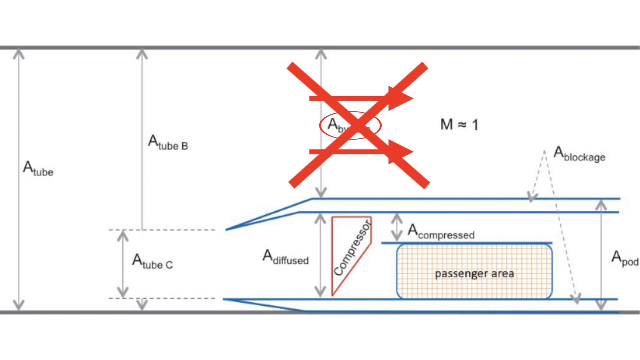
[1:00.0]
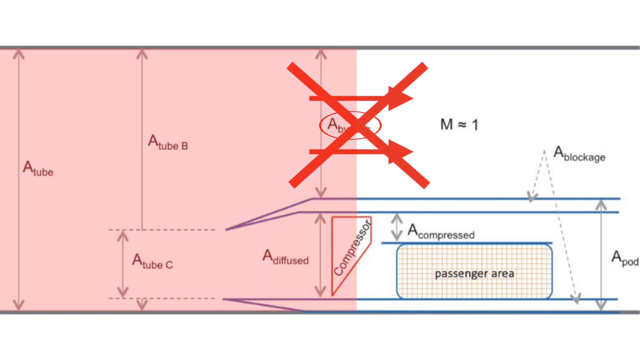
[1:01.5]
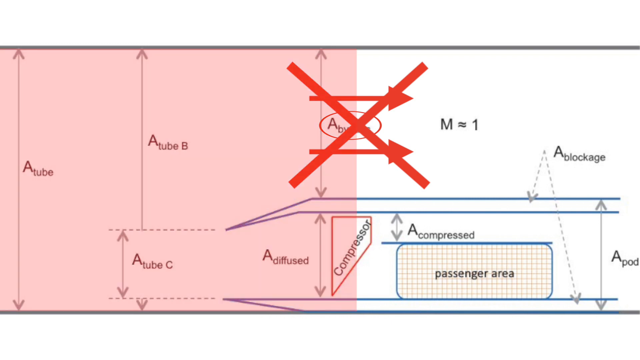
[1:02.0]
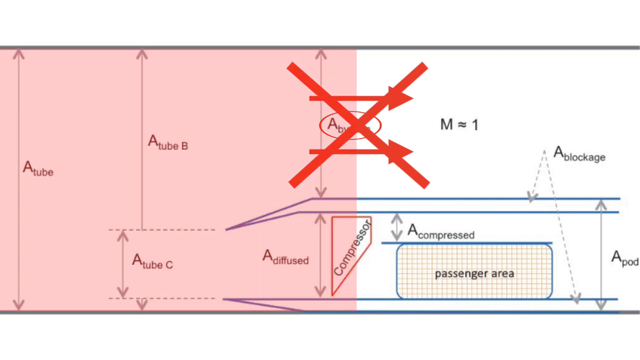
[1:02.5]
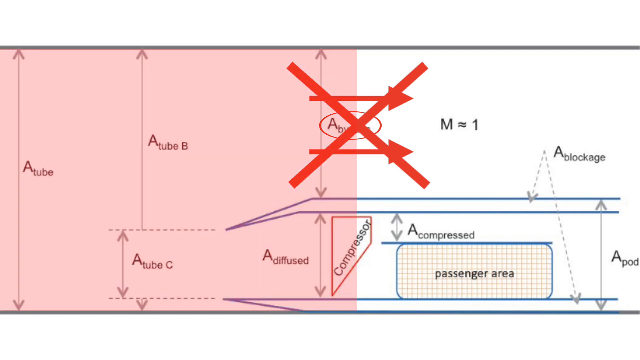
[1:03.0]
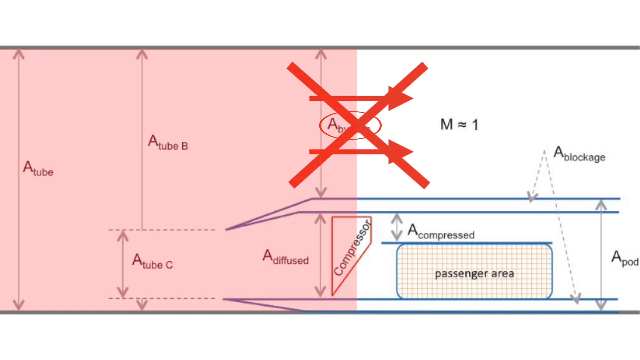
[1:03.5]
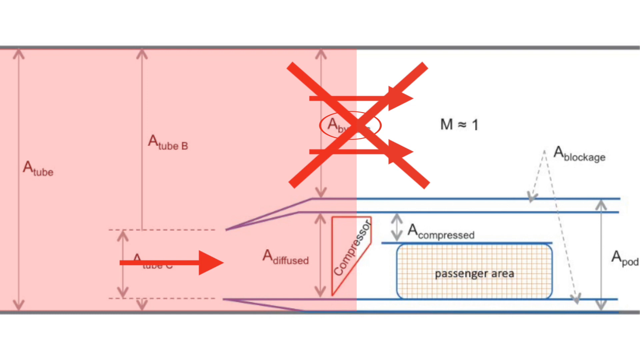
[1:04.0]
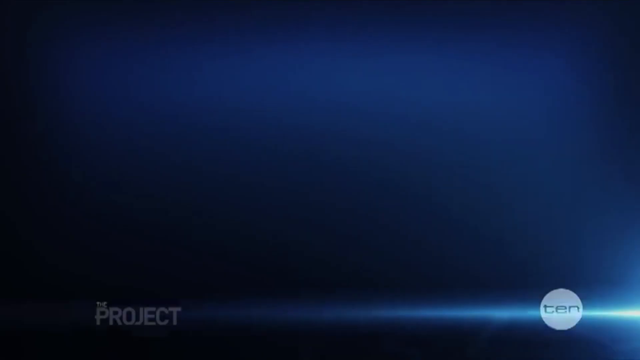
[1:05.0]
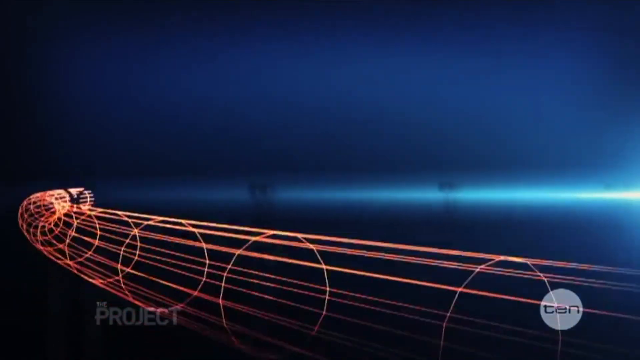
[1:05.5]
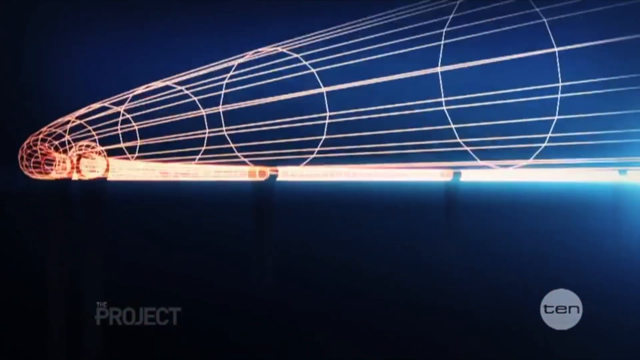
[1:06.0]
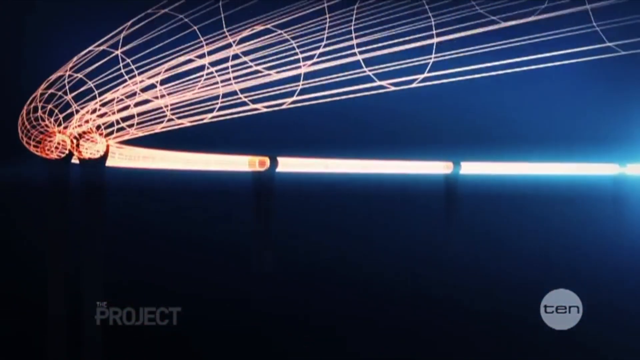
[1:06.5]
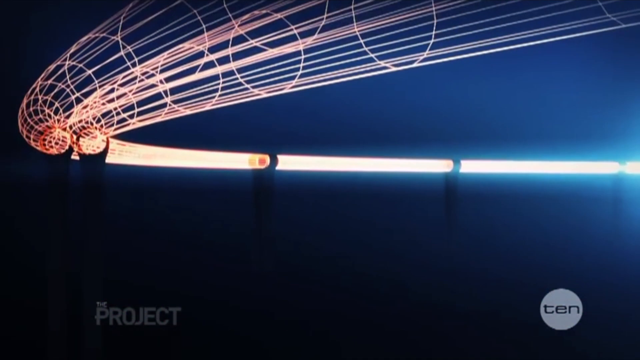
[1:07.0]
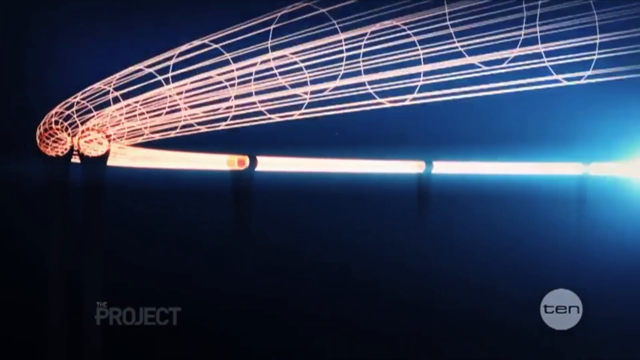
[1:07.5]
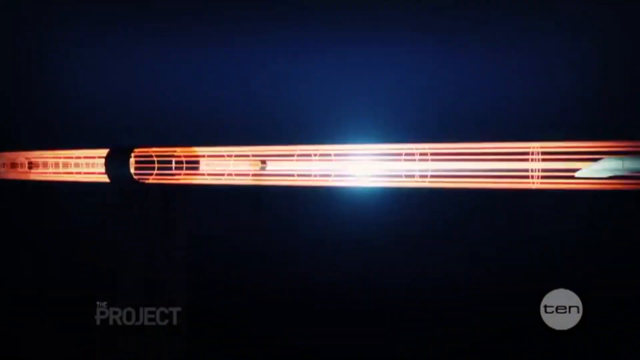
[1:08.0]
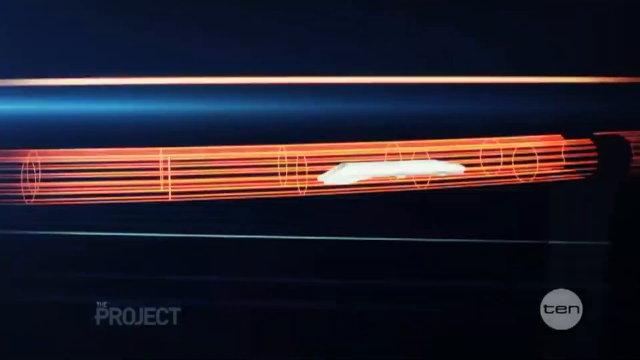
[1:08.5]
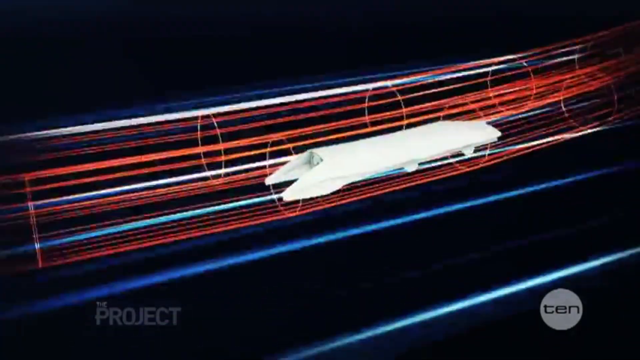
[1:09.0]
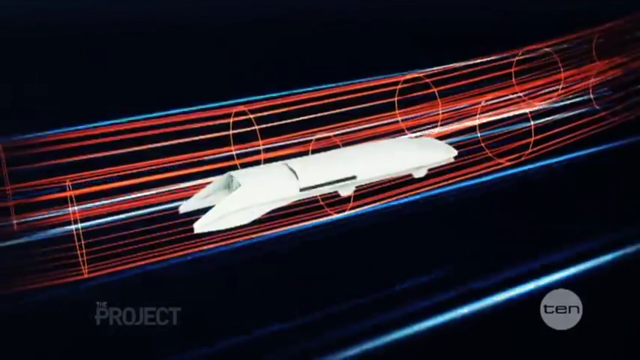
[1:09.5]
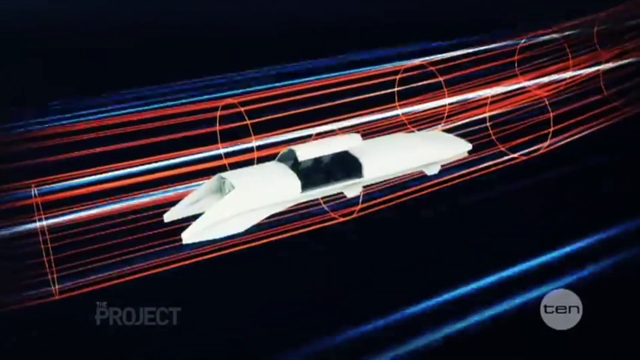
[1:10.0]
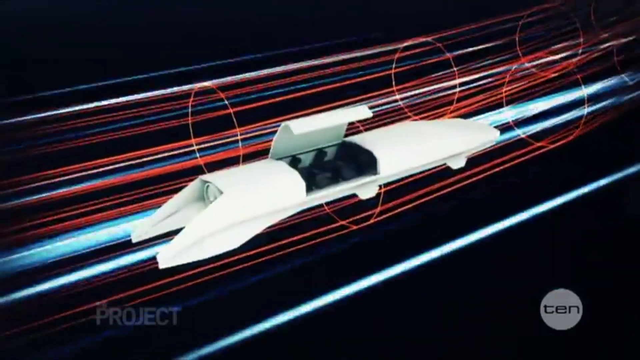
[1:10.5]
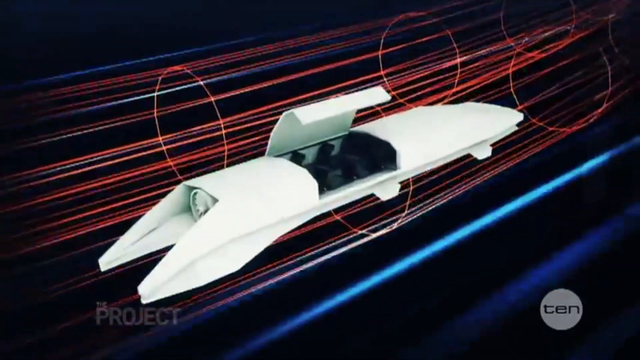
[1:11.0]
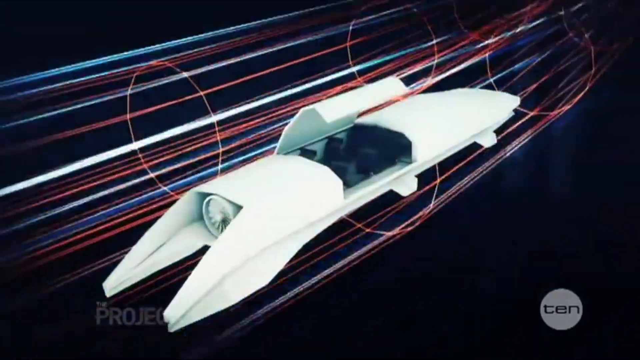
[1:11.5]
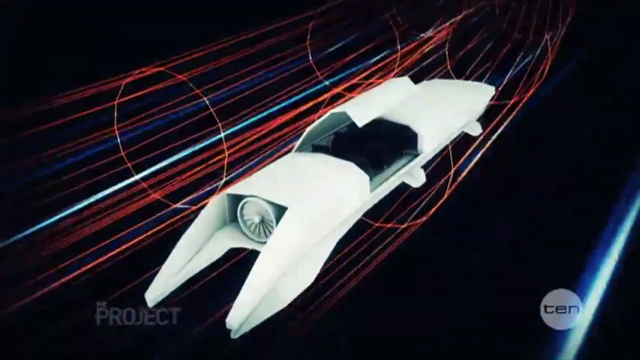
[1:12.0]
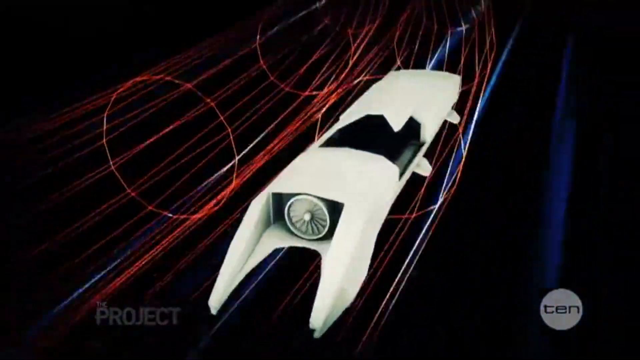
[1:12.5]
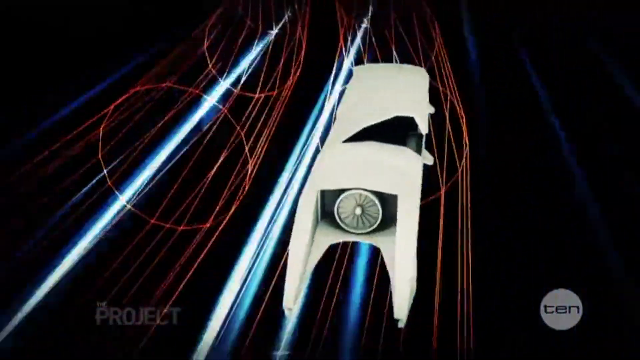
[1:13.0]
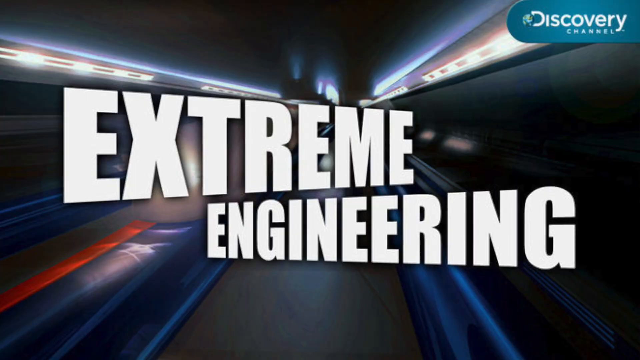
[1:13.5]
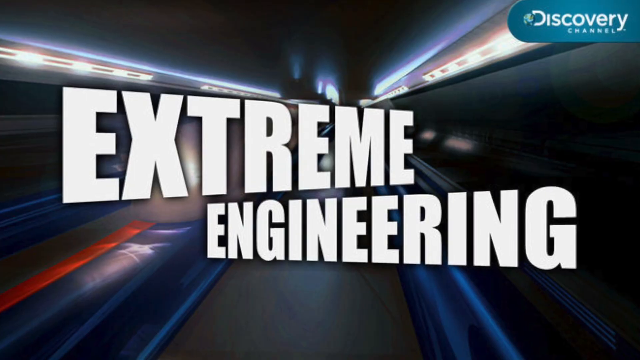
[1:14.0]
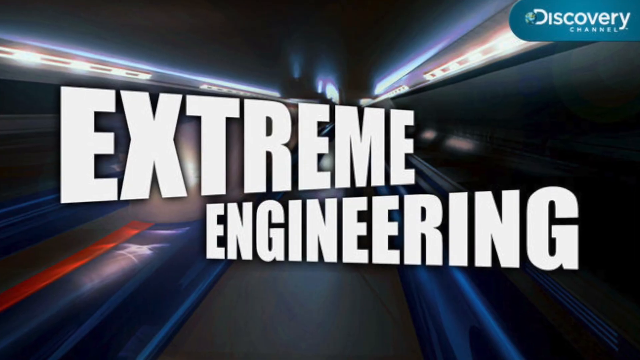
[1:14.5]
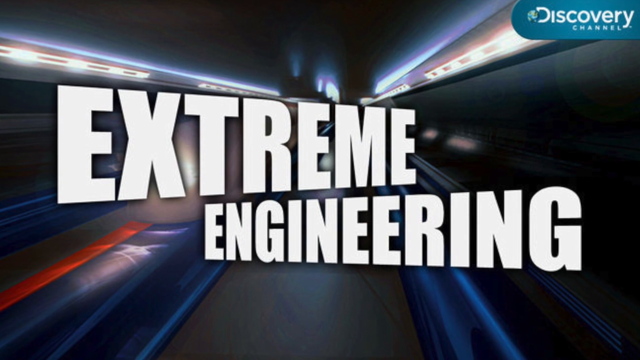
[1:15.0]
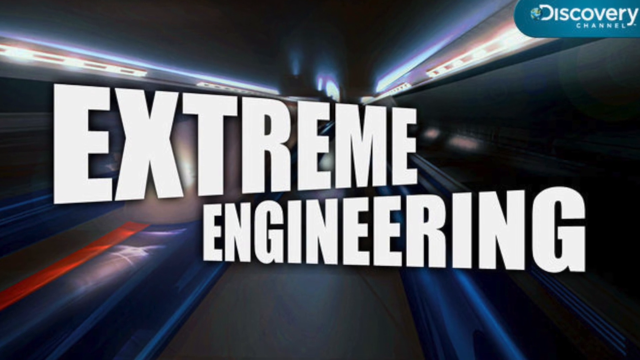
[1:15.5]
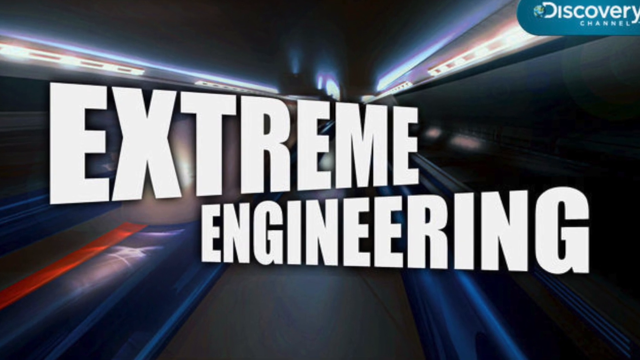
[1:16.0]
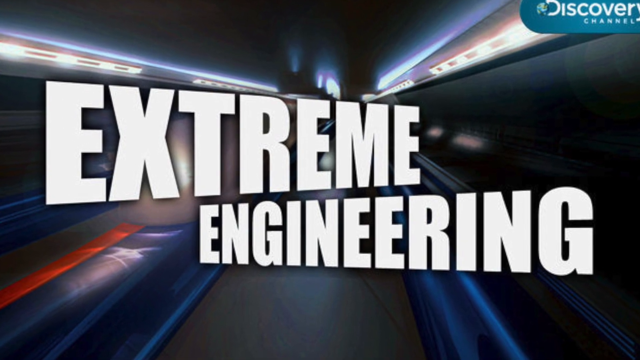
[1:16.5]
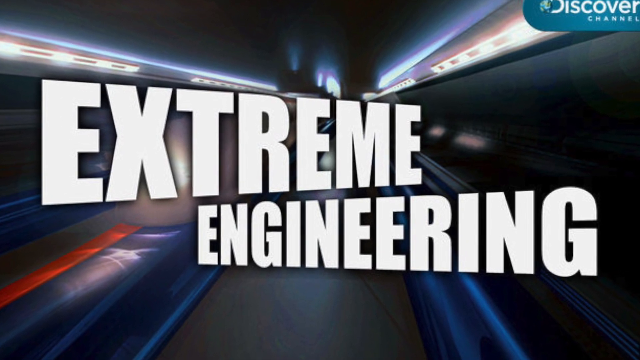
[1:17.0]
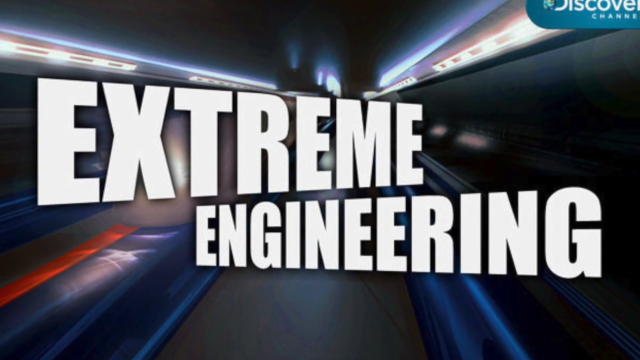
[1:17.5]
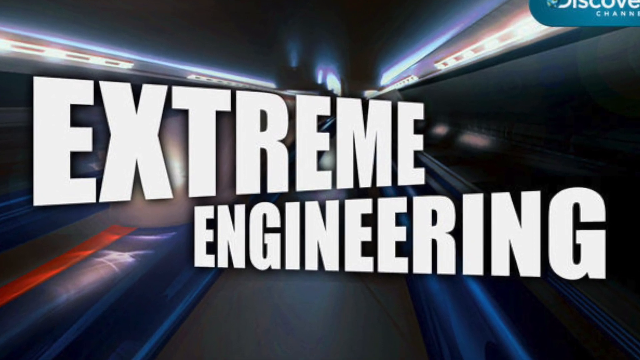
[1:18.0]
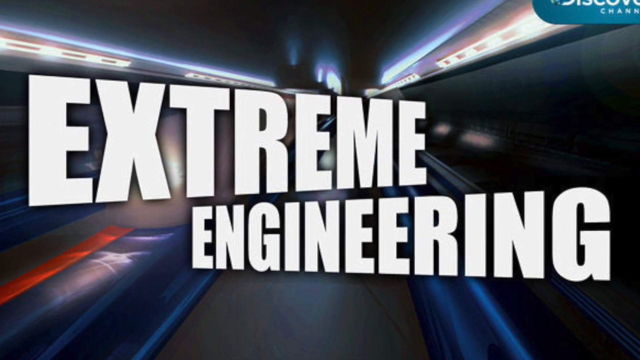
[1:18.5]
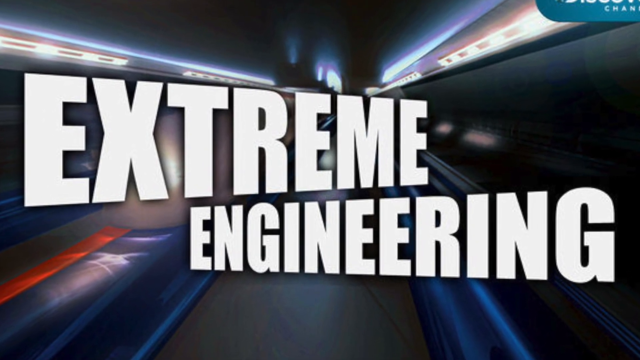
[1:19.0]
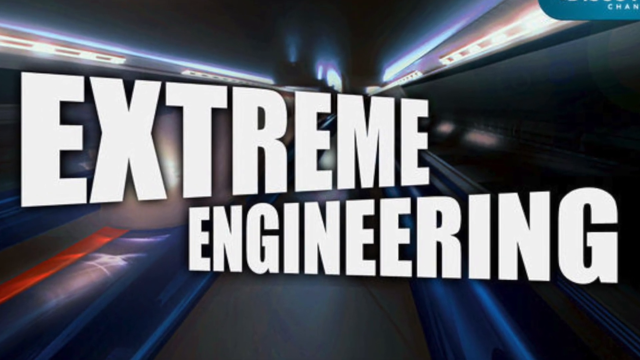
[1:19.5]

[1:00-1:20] A diagram shows a big red X across the bypass. The whole left side turns pink, and an arrow pointing to the right is added. A very fast-looking tube appears that looks like something would go through it. A white contraption that looks like a car from the future is shown, with its opening in the top and a passenger area.